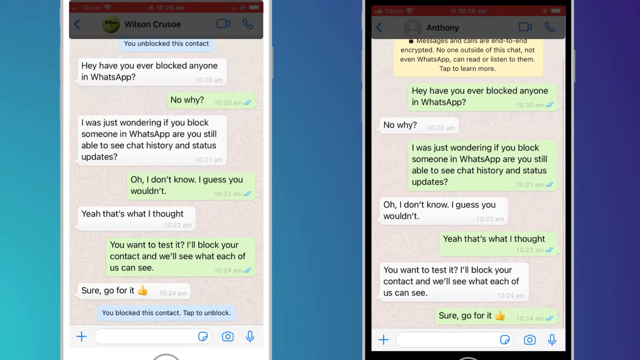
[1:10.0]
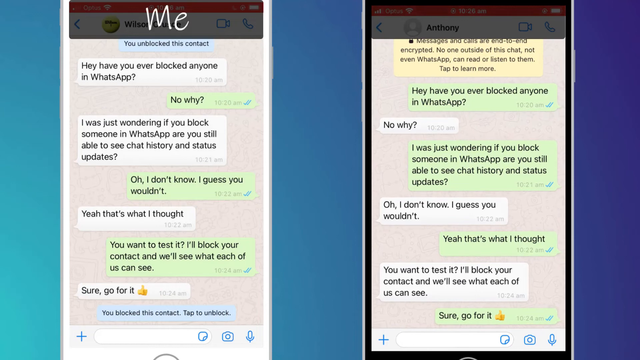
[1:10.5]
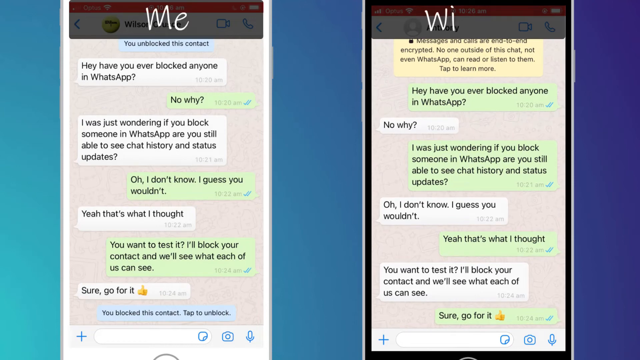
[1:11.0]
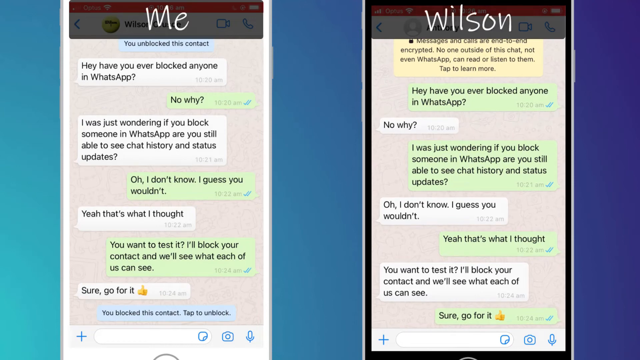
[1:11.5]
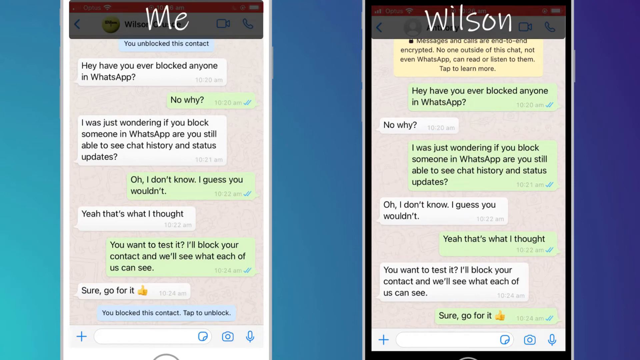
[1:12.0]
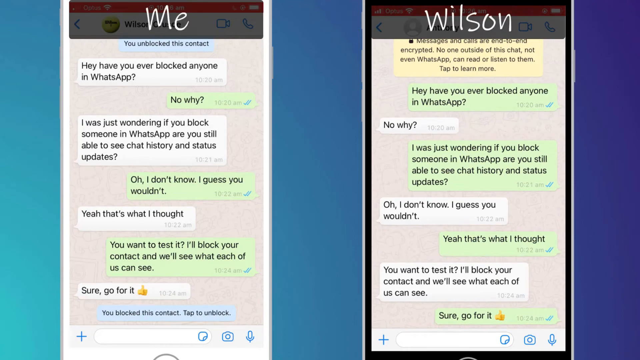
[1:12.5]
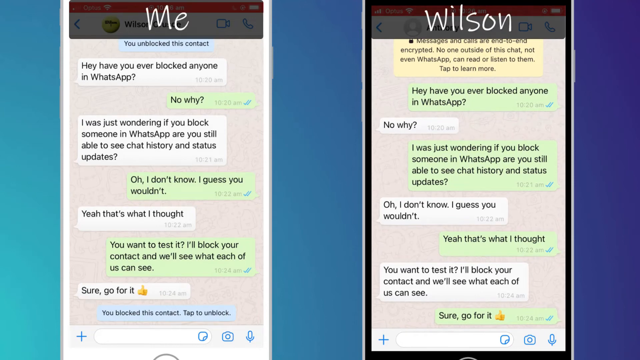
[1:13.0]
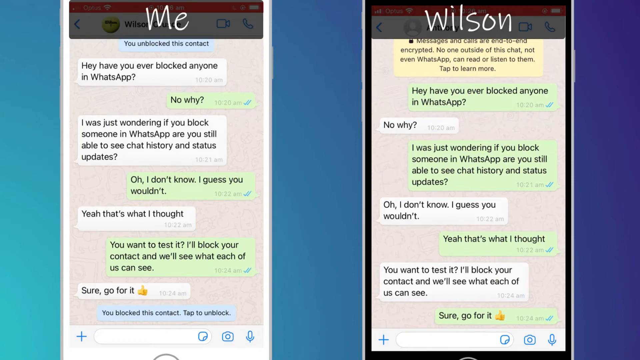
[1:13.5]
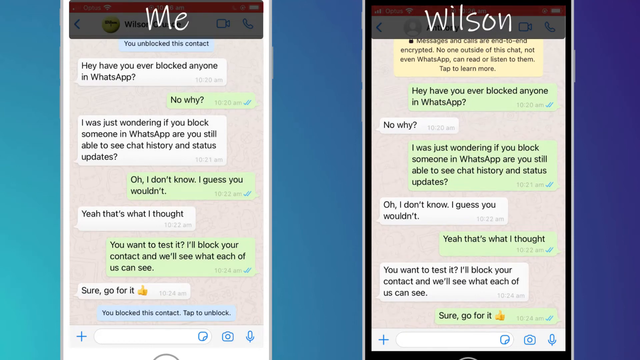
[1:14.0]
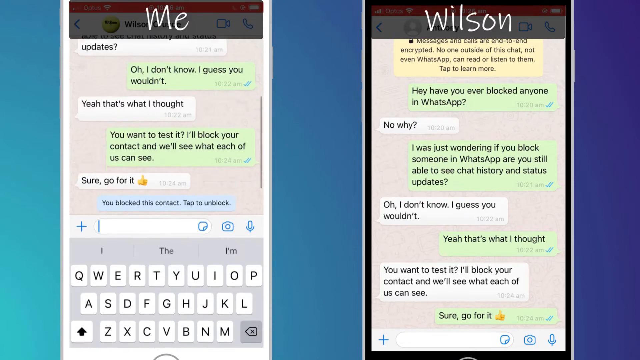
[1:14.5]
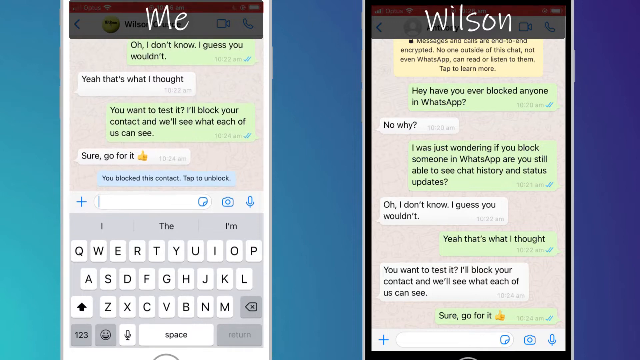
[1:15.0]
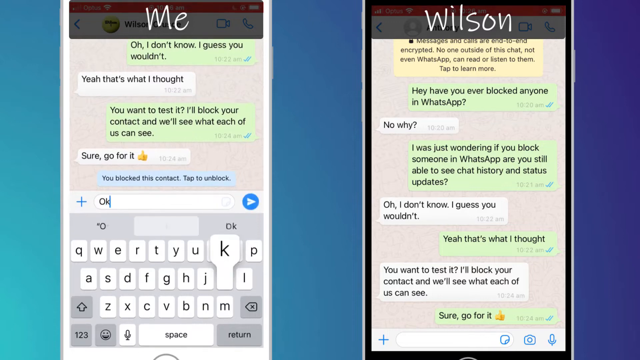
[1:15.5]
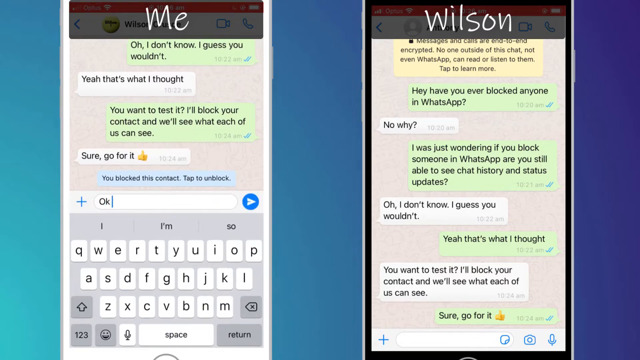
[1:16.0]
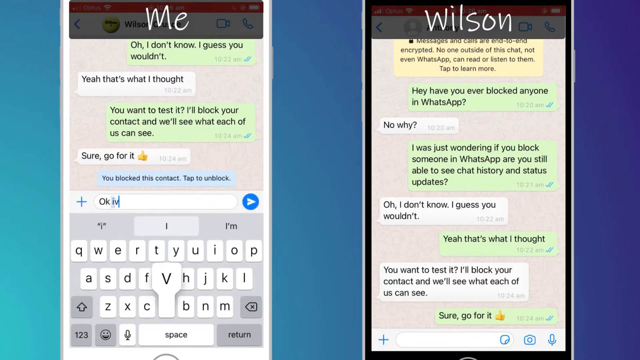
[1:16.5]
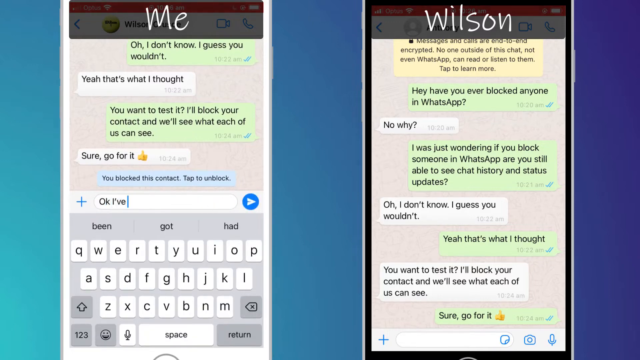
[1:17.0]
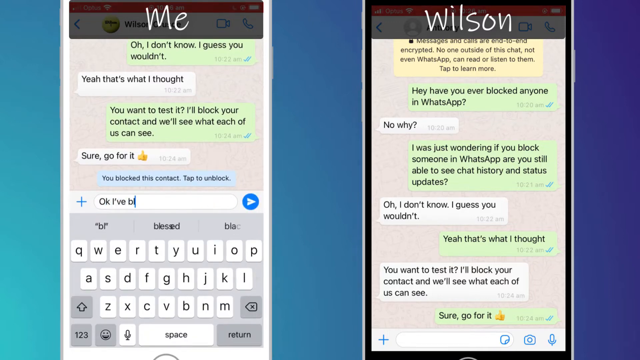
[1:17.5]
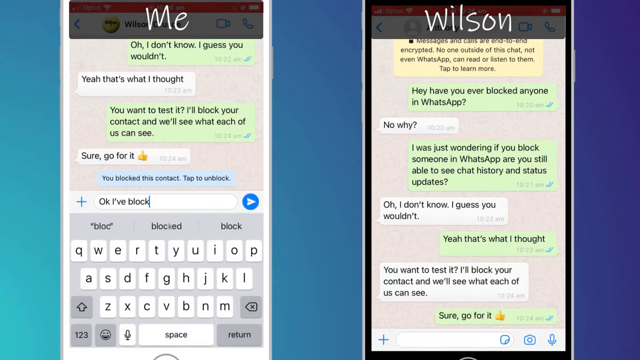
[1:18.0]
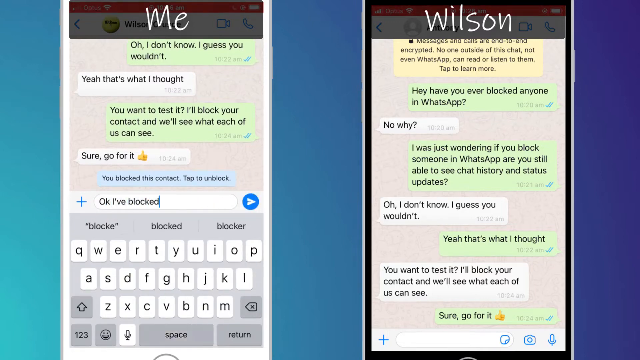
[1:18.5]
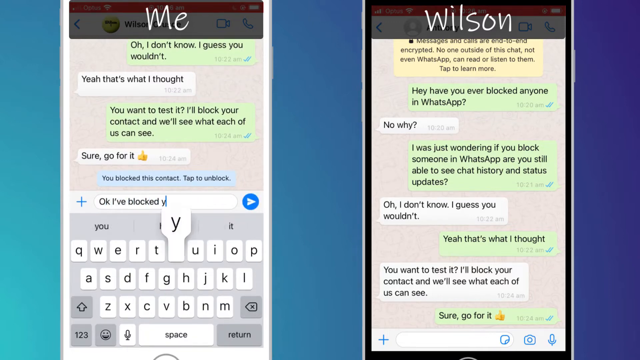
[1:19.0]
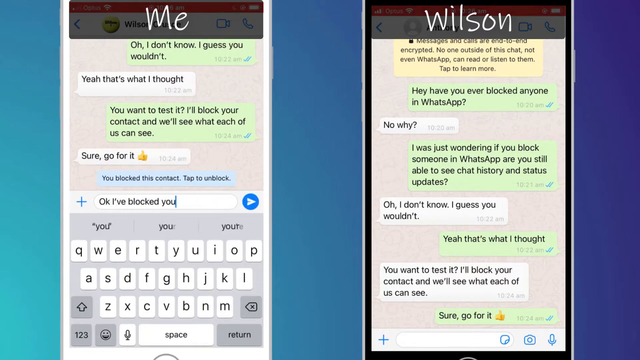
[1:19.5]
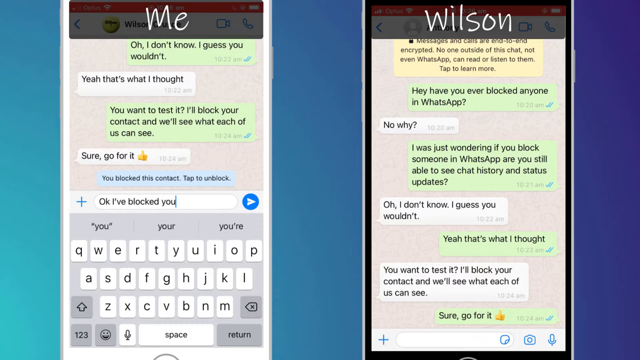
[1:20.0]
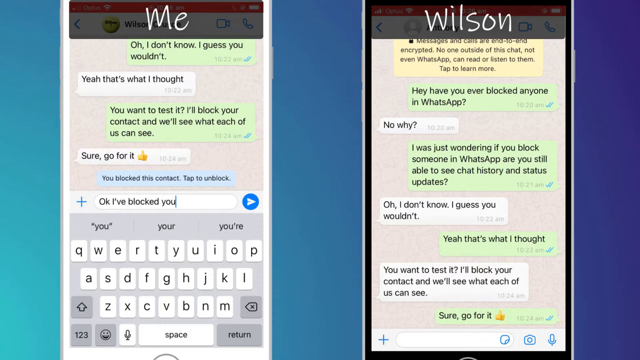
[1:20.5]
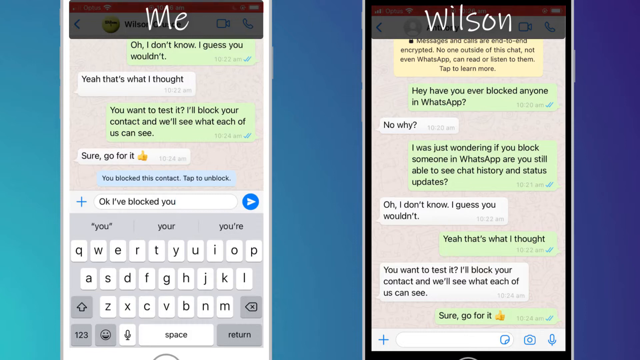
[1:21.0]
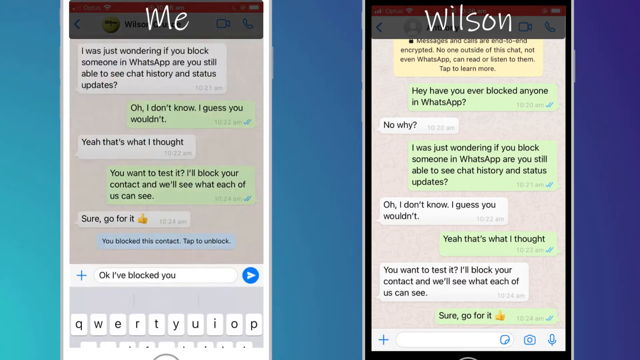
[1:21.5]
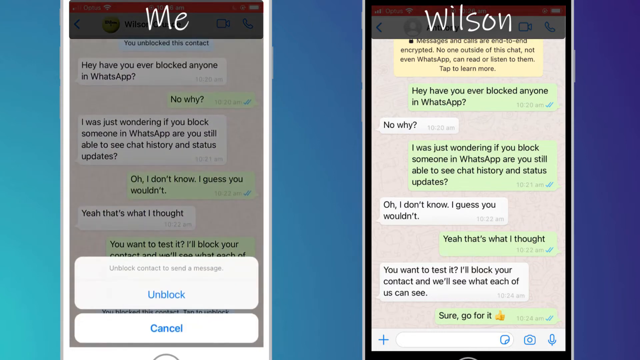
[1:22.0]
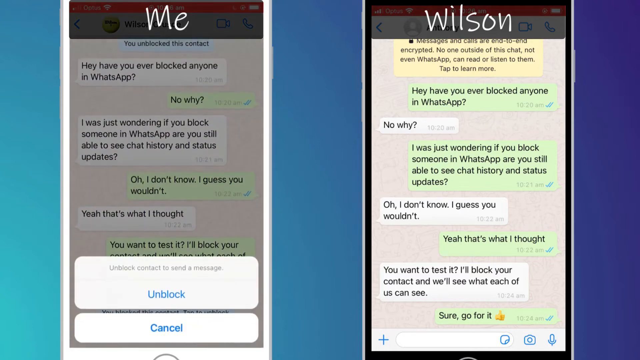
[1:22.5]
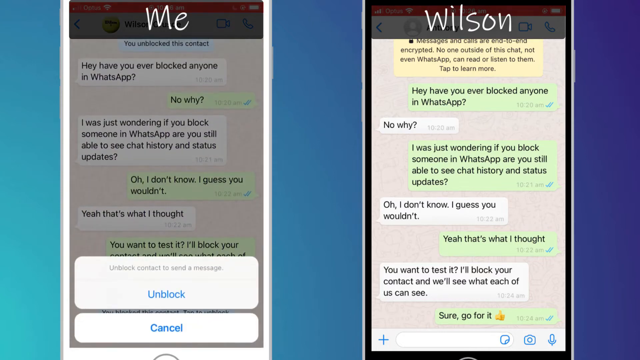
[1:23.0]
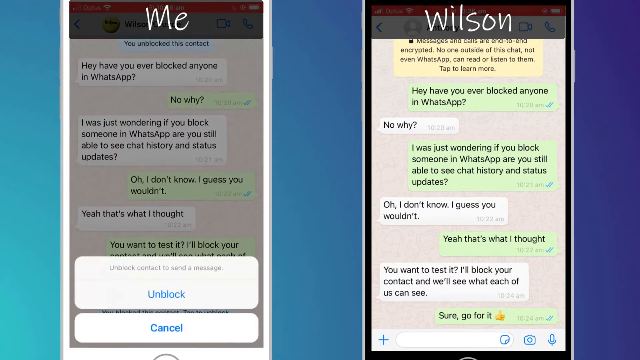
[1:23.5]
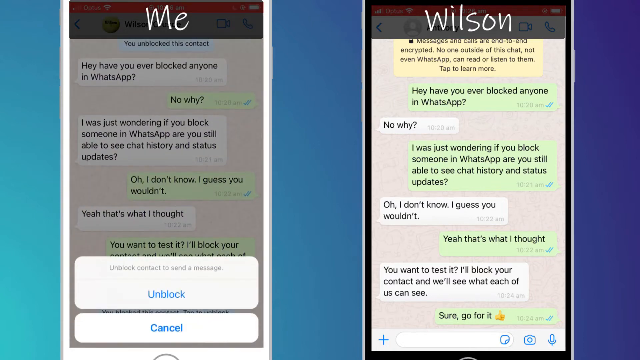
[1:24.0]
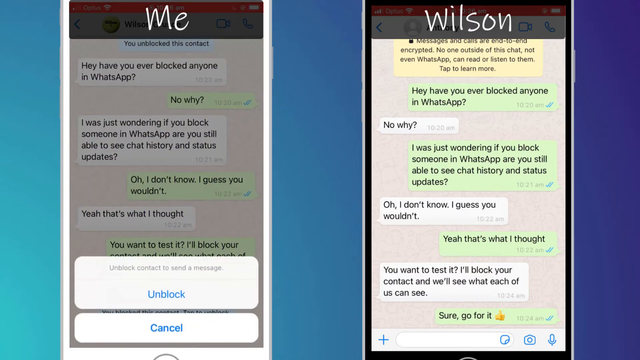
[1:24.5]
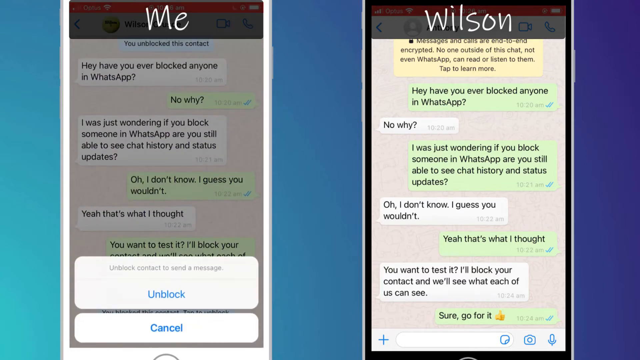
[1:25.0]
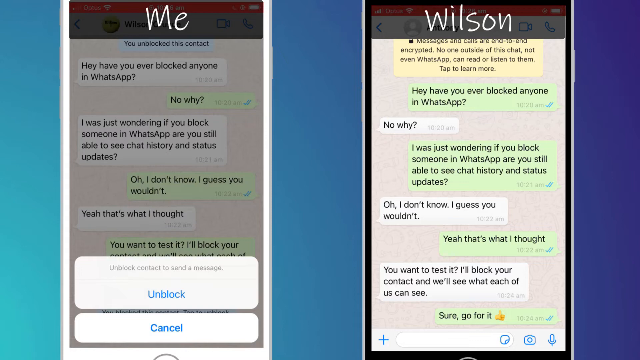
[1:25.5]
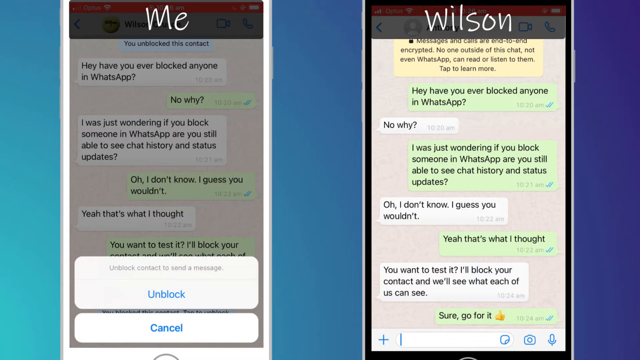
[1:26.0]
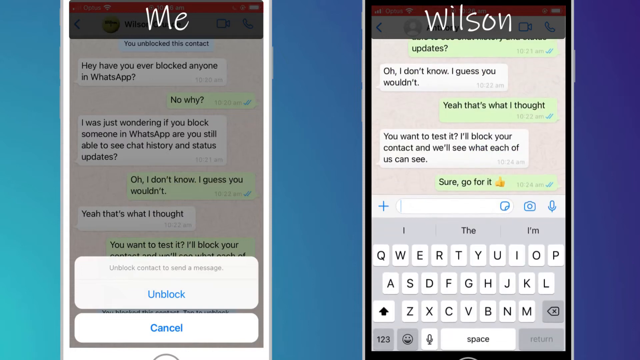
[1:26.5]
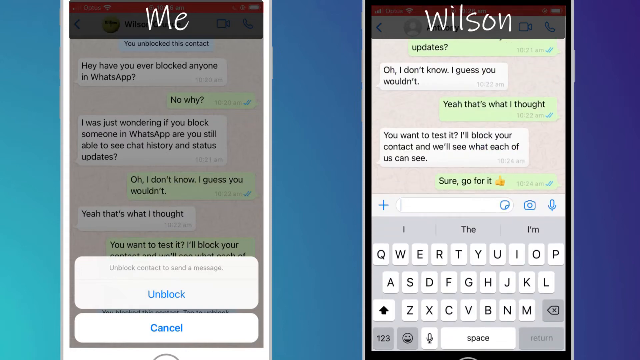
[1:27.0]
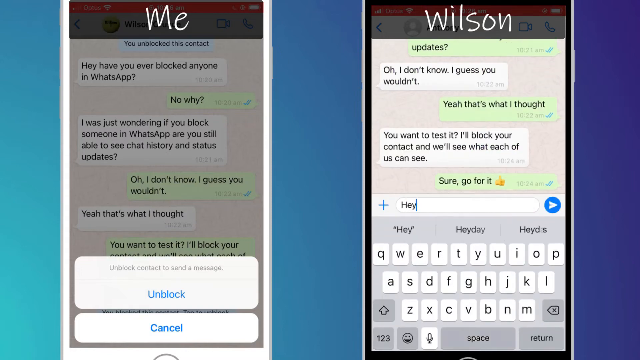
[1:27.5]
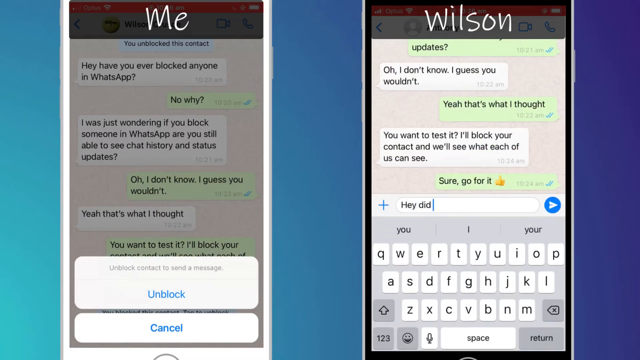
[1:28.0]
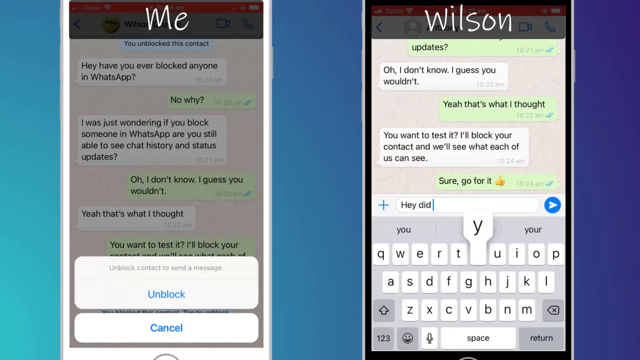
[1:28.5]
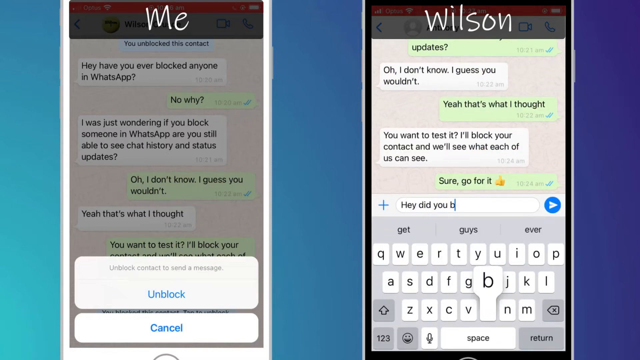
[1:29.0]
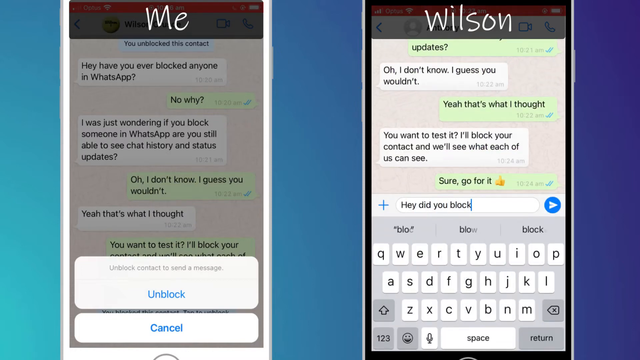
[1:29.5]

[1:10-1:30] Against a blue background that is lighter on the left, darker toward the right and almost purple on the right side, there are two phone screens, one on the left and one on the right. The contact on the left phone is "Wilson Crusoe" and the contact on the right is "Anthony". The left phone shows the conversation: "hey, have you ever blocked anyone", a reply "No. Why?", then "oh, I don't know. I guess you would.", "Yeah, that's what I thought", "you want to test it. I'll block your contact and we'll see which each of us can see" and "Sure. Go for it." At the bottom it says "you block this contact tap to unblock". The right phone shows the same conversation reversed. White letters above the left phone say "me", and above the right phone it says "Wilson". On the left phone the view scrolls down and a message beginning "I blocked" is typed; he presses send, and "unblock contact to send a message" appears. On the right phone the person types "Hey, did you block me?"